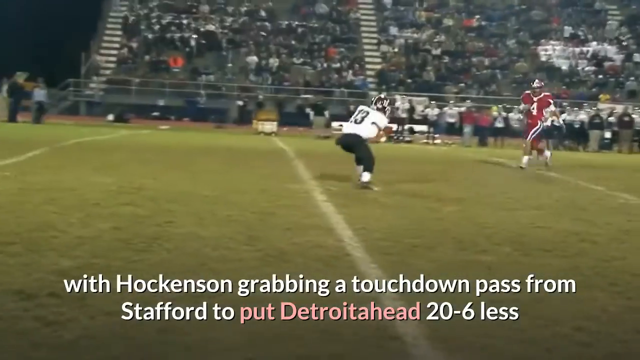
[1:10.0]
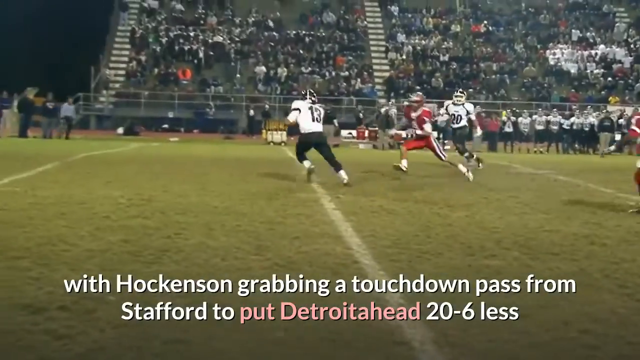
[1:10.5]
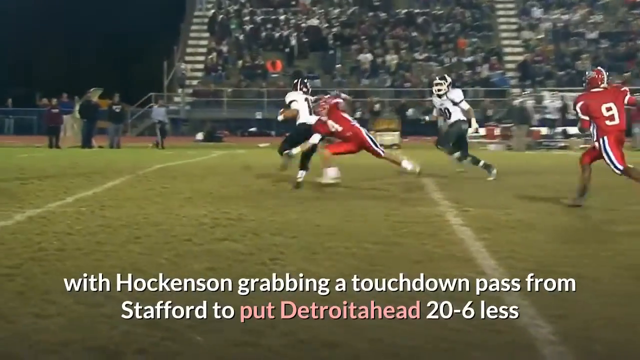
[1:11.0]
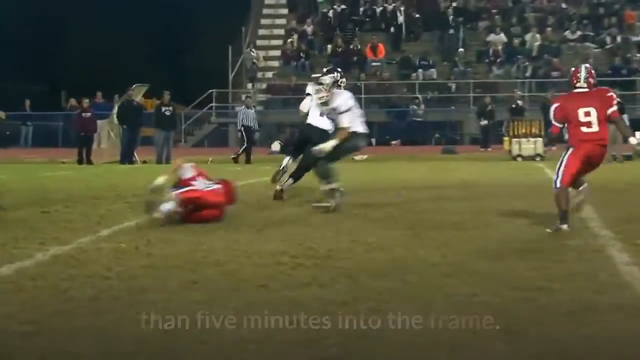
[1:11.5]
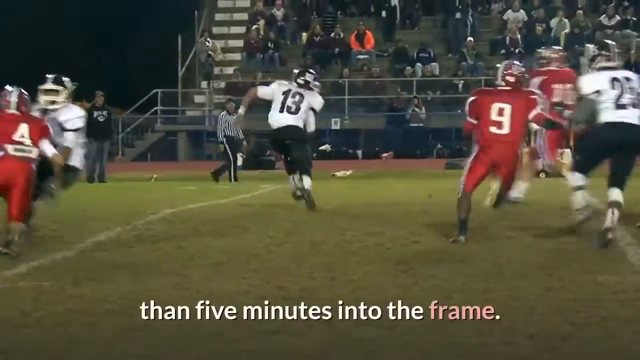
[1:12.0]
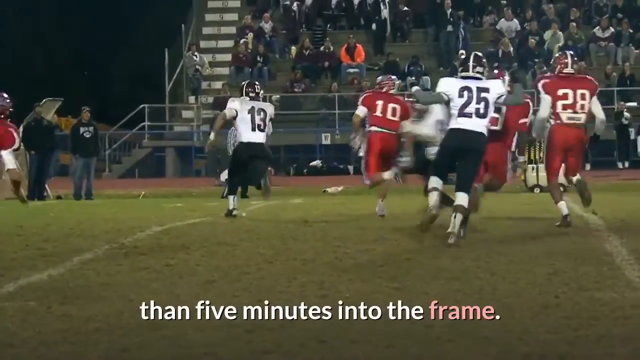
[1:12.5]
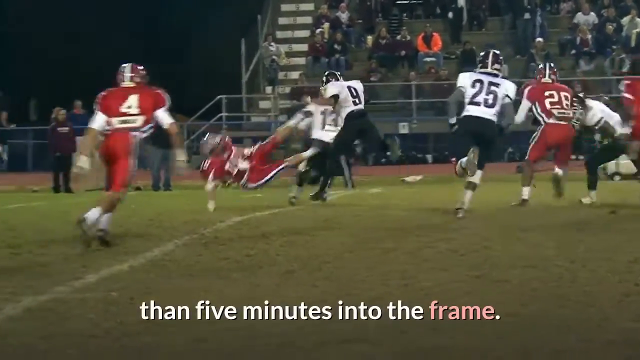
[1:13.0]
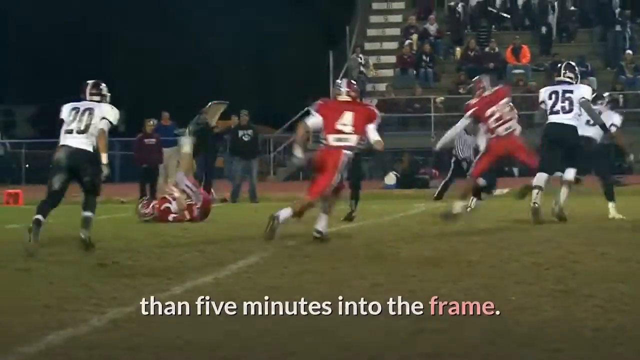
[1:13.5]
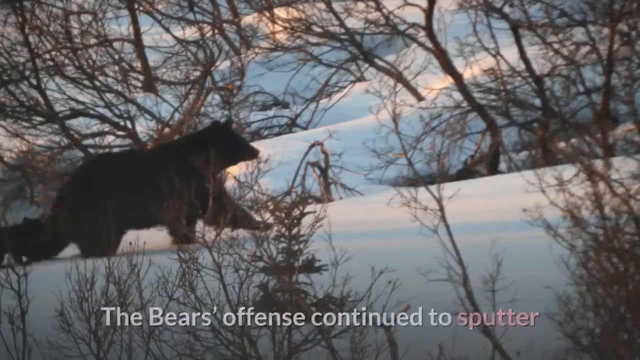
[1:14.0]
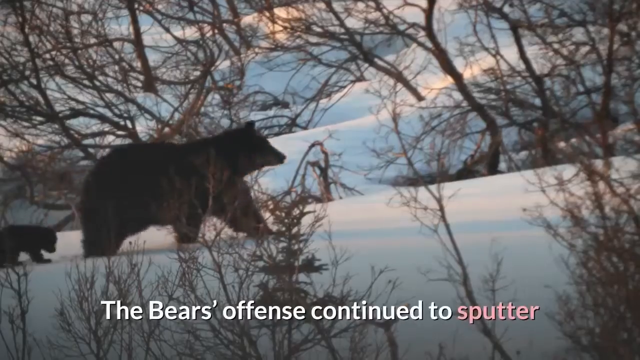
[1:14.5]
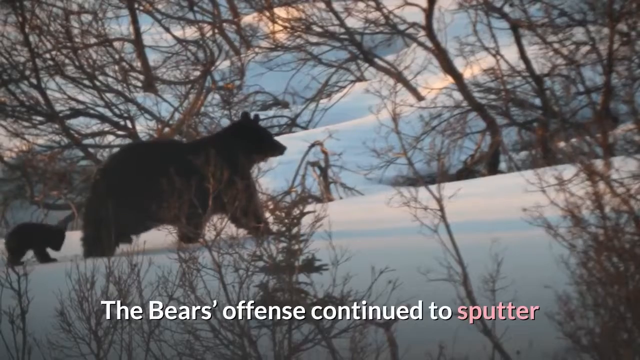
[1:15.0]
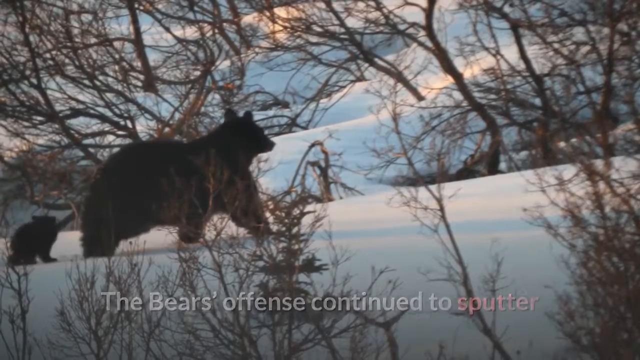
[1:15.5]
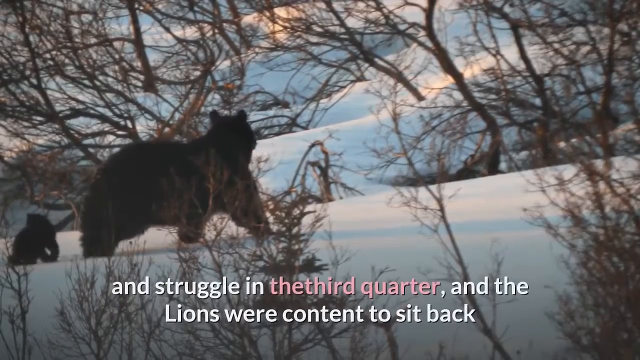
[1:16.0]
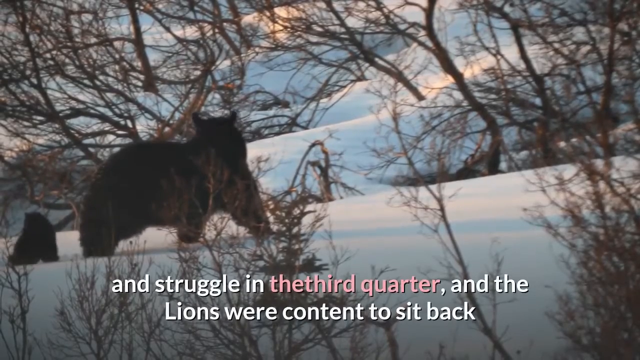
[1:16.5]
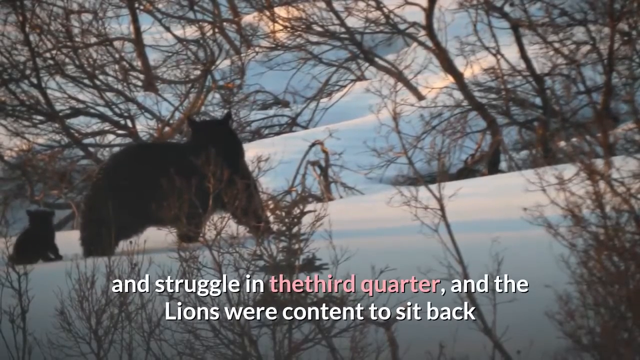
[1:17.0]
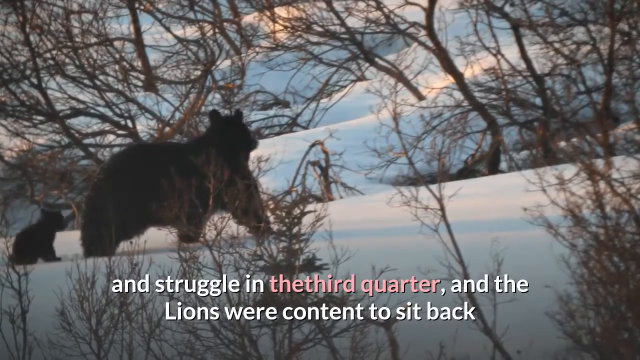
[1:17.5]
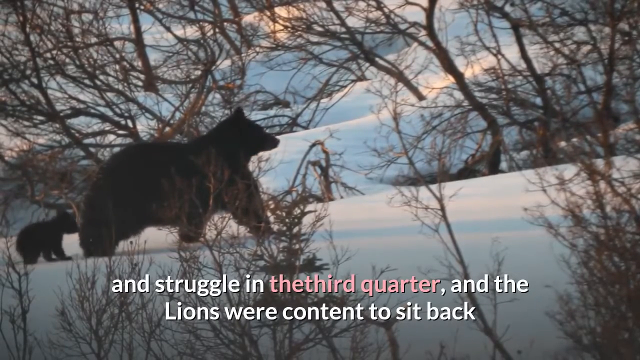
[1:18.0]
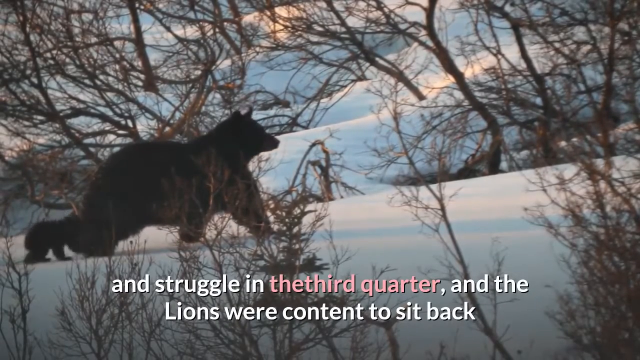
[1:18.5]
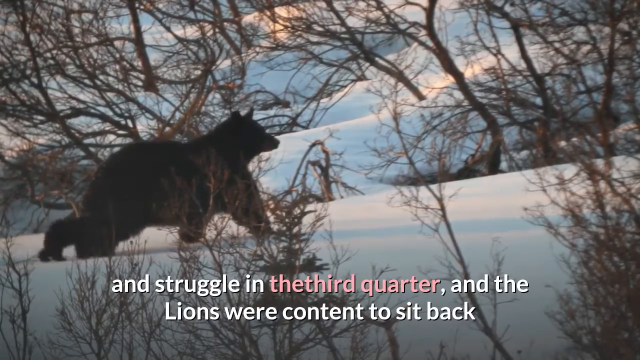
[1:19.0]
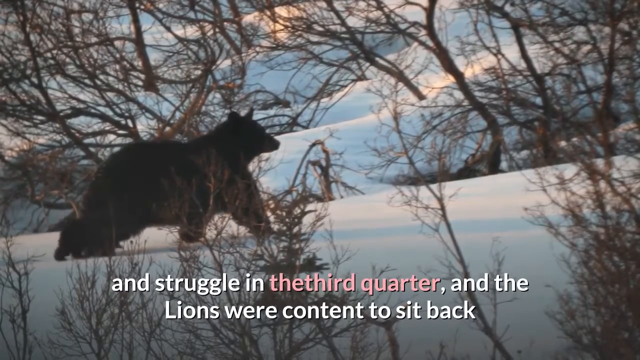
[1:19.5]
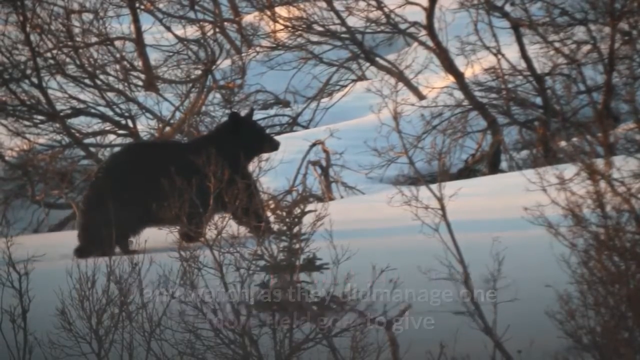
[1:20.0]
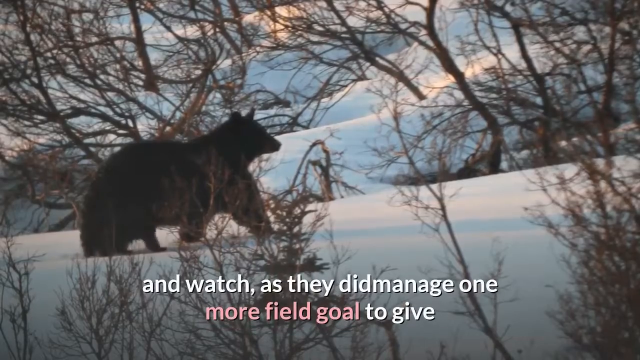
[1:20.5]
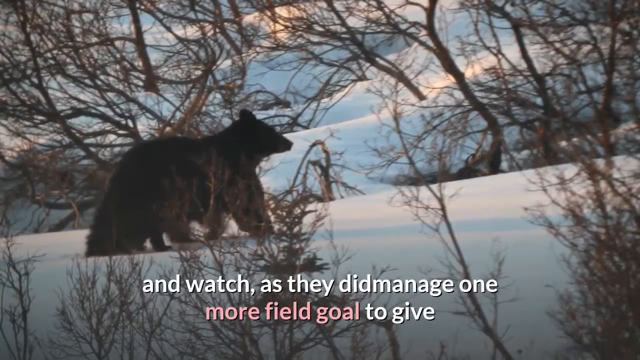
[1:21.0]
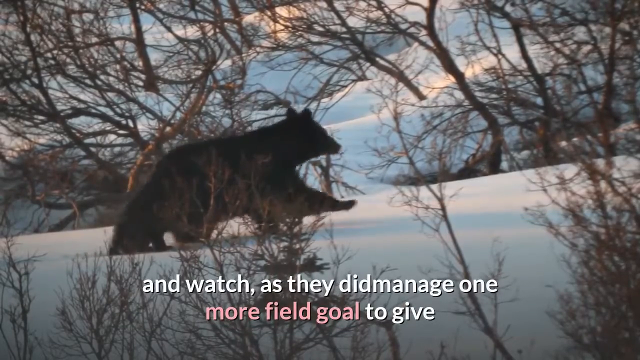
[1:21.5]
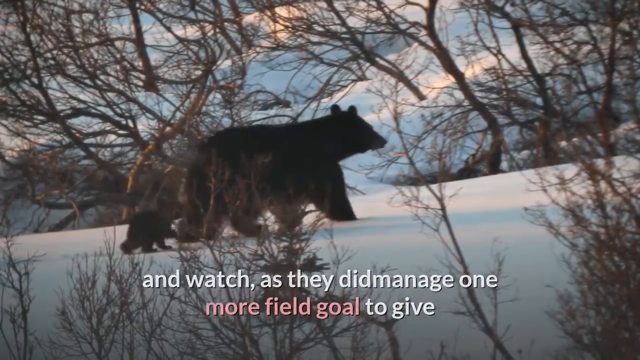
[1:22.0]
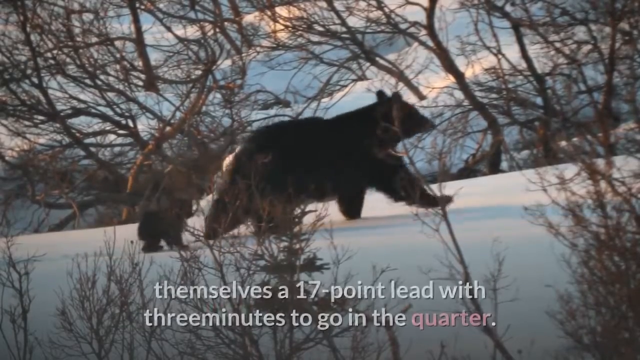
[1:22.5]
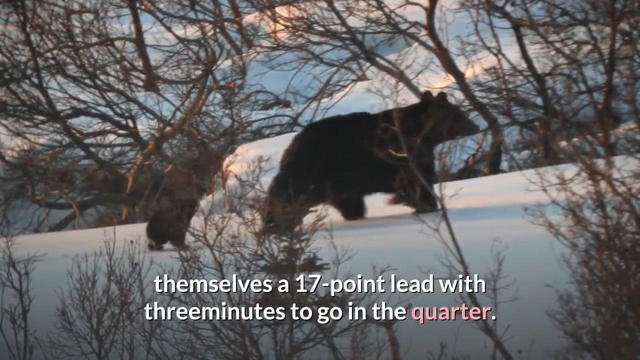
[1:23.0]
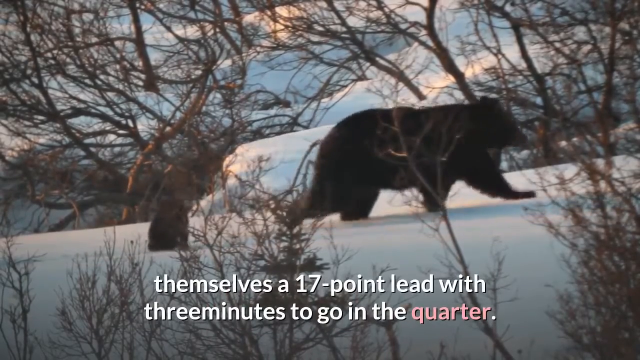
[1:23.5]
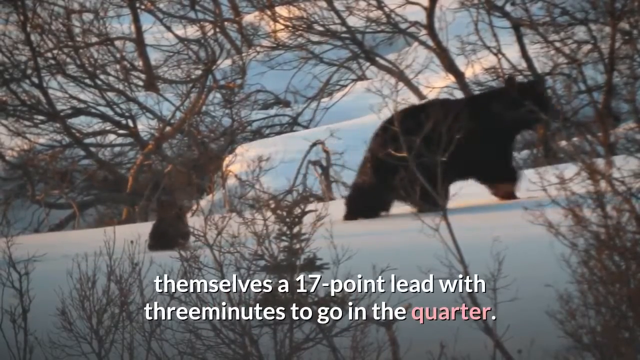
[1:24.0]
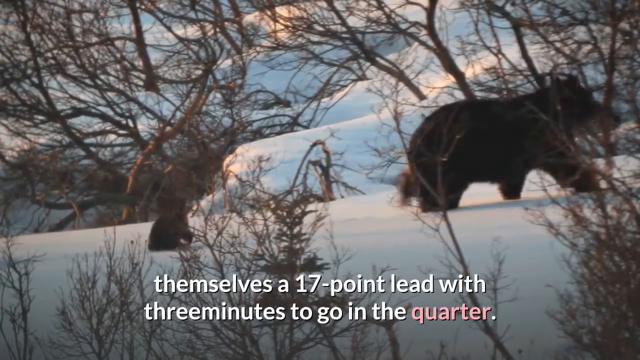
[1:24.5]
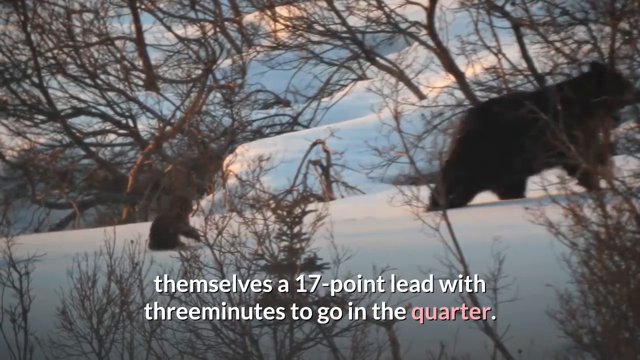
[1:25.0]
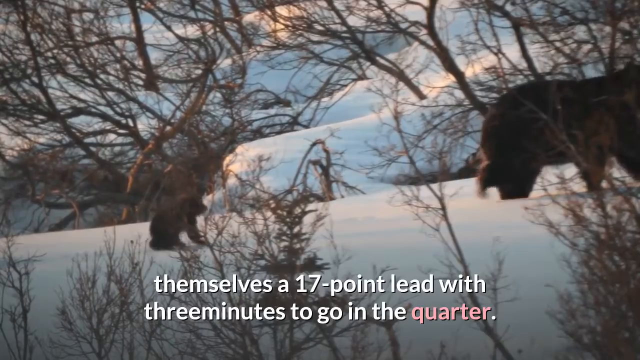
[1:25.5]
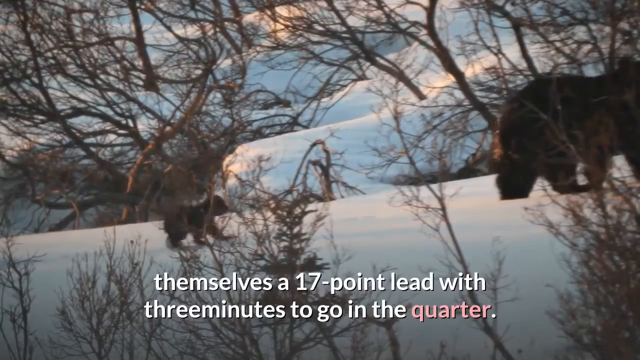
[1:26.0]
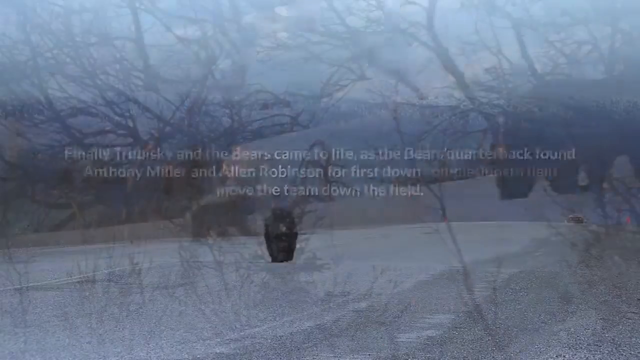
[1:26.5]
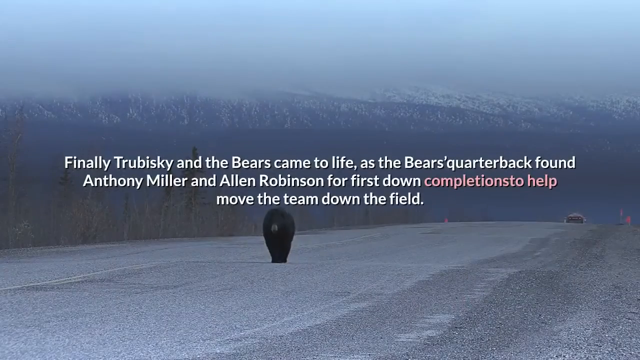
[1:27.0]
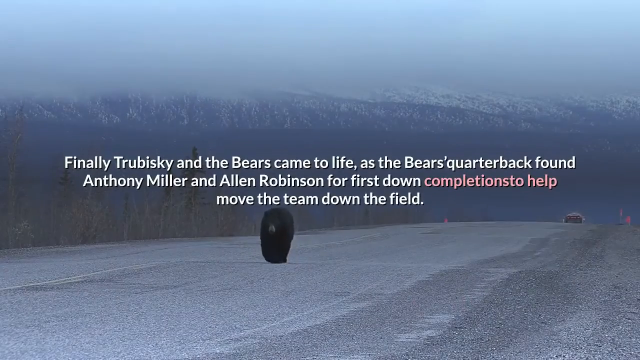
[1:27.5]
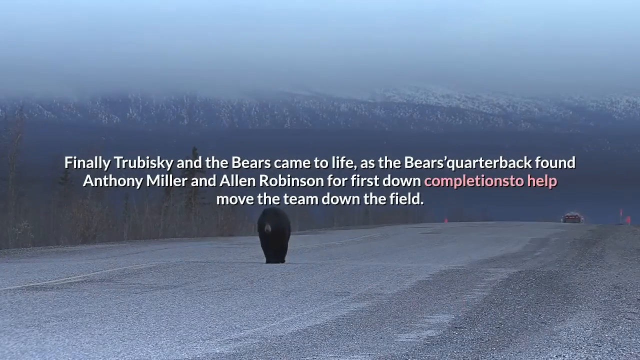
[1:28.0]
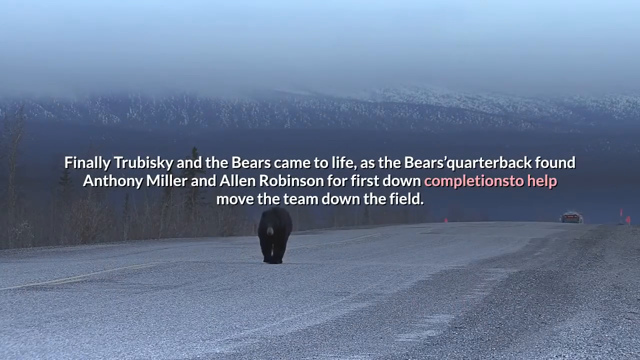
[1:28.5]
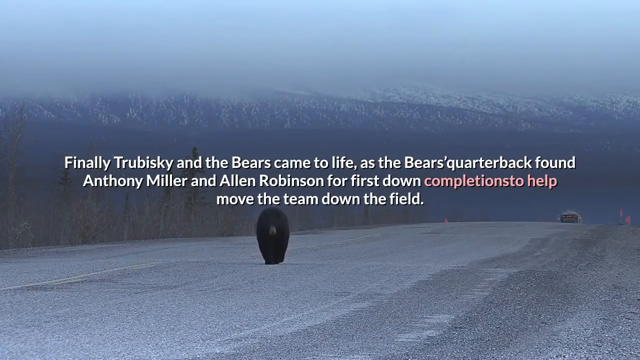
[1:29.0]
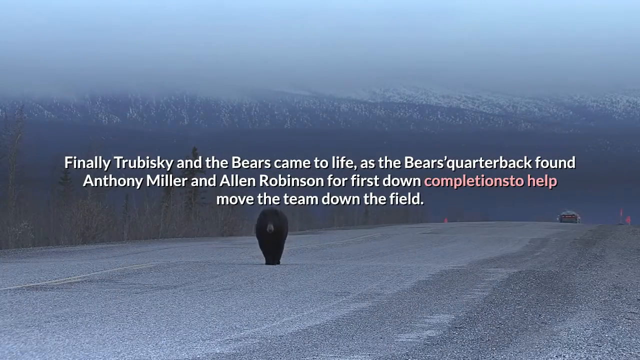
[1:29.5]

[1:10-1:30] Text is written at the bottom of the frame. The video shows a football match between a team wearing red and another wearing black and white; a white team member runs and a red team member falls. Next, a bear appears, and text at the bottom mentions that the offense "continued to sputter" and that "the Lions were content to sit back and watch," managing one more goal to give themselves "a seven point lead." A bear is then seen with a smaller bear behind it in a mountain-like area. The next screen shows a bear walking on a road with a car or bus seemingly approaching from far behind; the sky is white, and a mountain is visible in the distance. Further text mentions Anthony Miller.